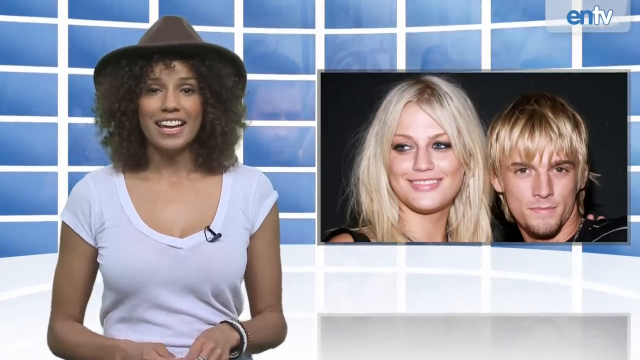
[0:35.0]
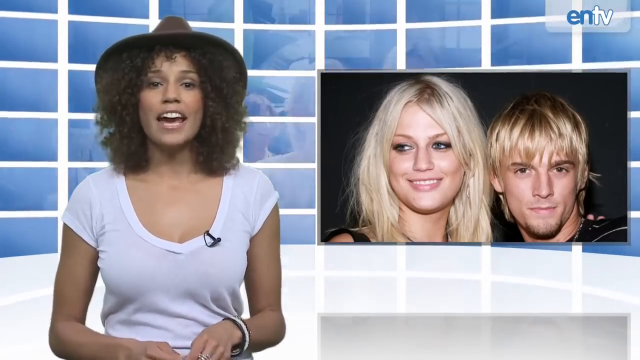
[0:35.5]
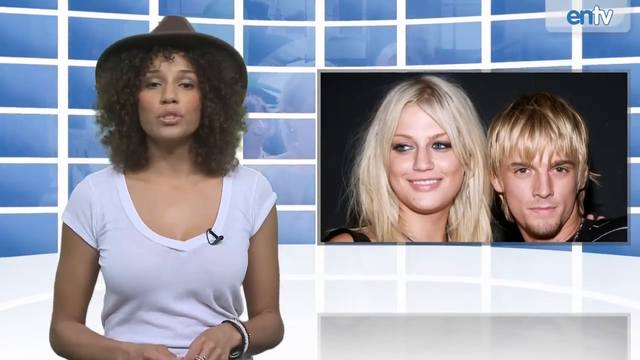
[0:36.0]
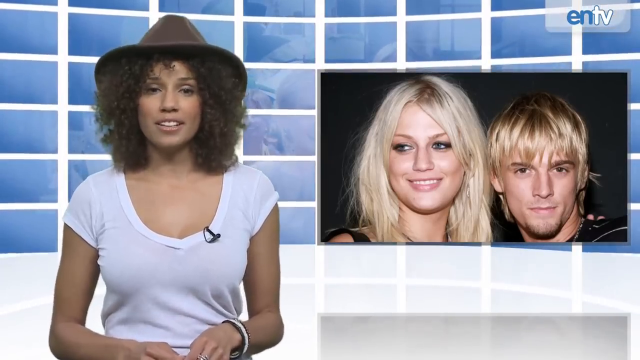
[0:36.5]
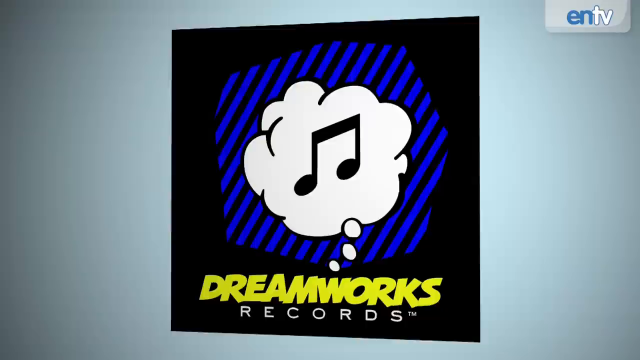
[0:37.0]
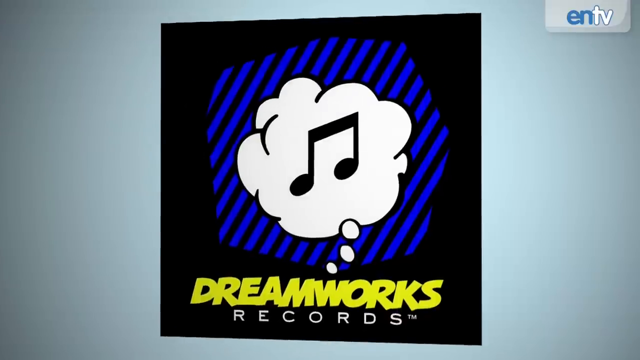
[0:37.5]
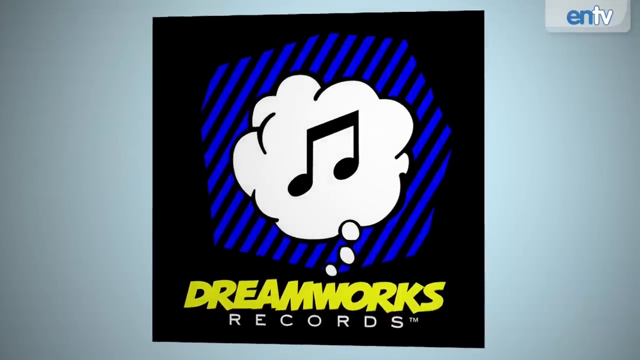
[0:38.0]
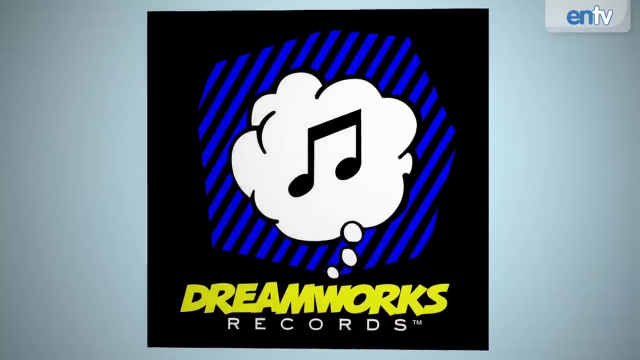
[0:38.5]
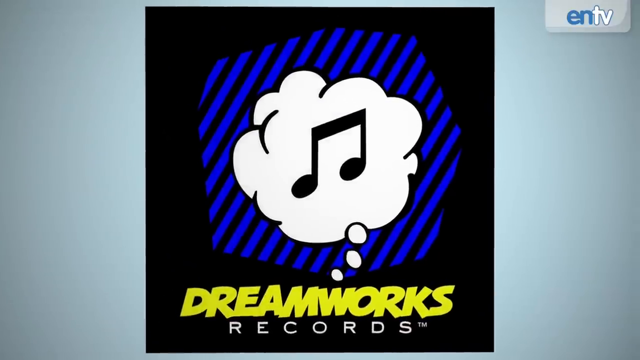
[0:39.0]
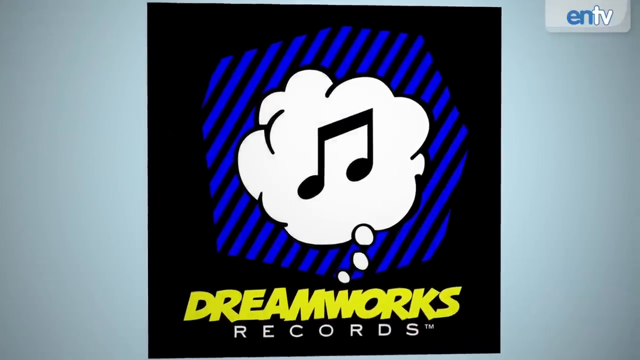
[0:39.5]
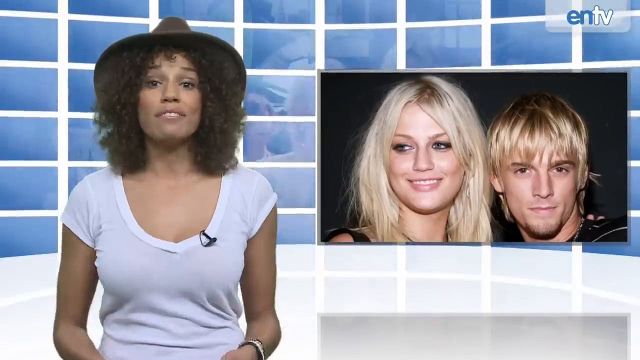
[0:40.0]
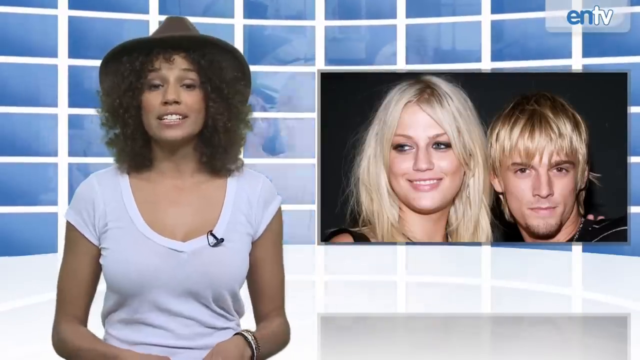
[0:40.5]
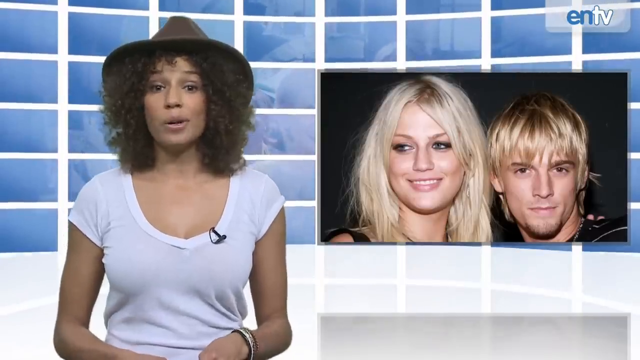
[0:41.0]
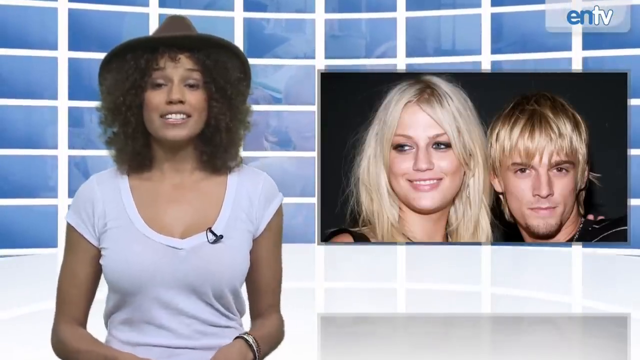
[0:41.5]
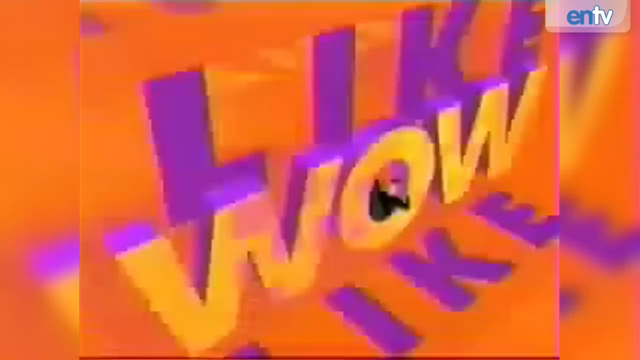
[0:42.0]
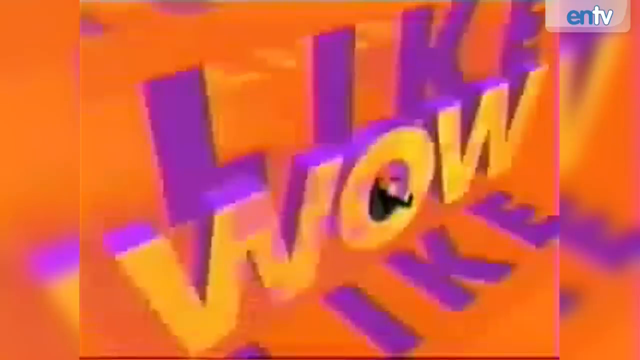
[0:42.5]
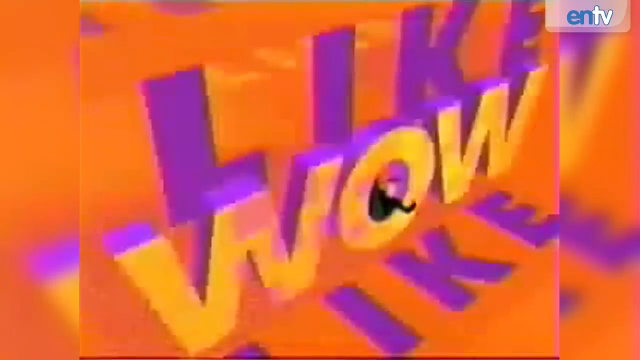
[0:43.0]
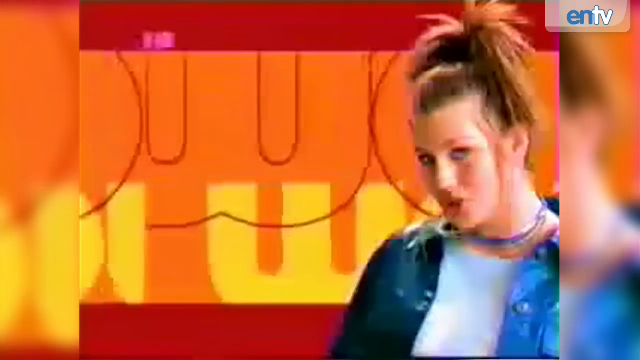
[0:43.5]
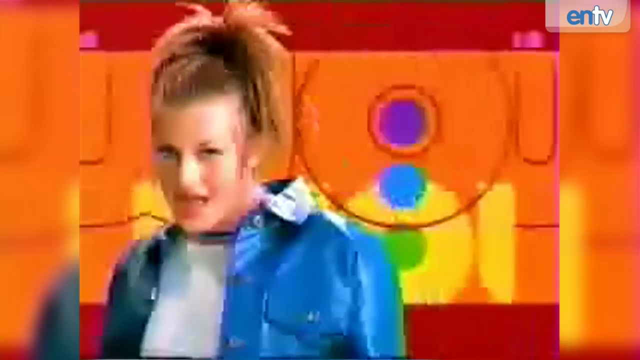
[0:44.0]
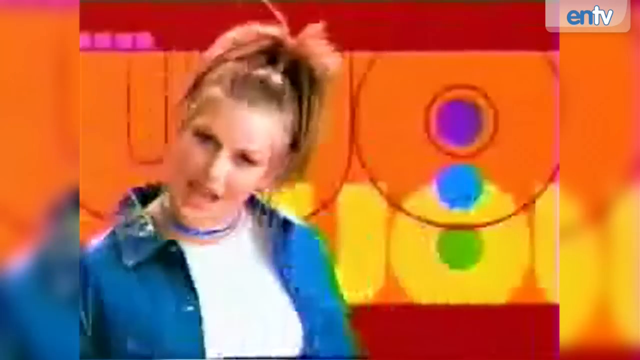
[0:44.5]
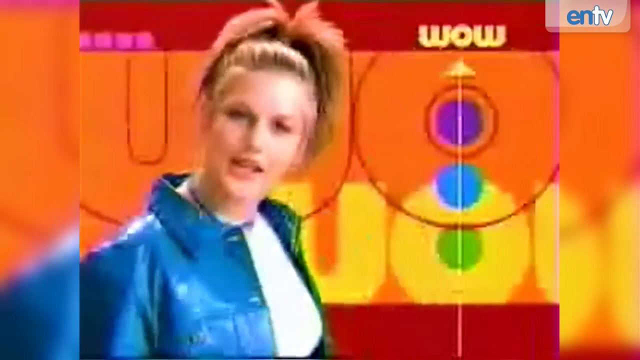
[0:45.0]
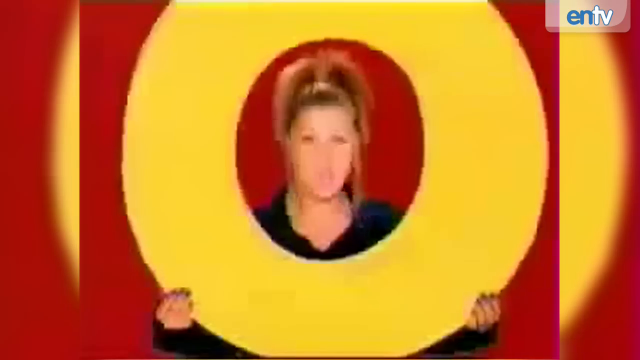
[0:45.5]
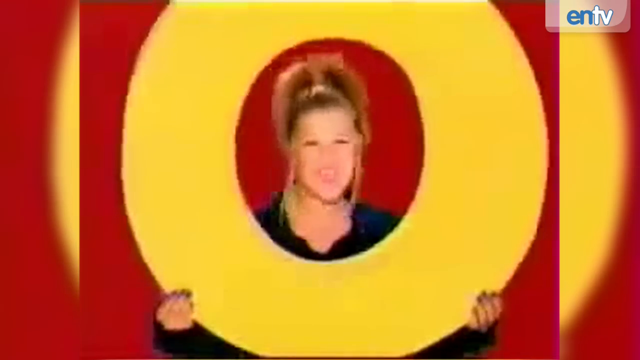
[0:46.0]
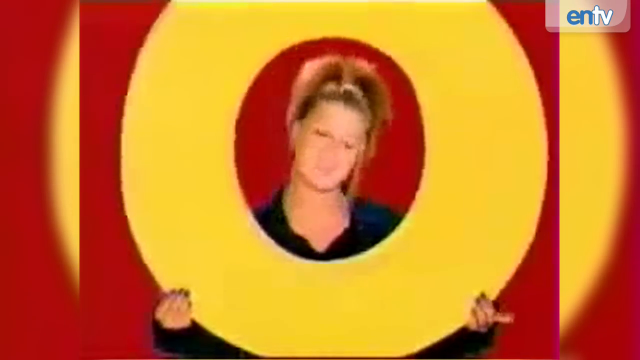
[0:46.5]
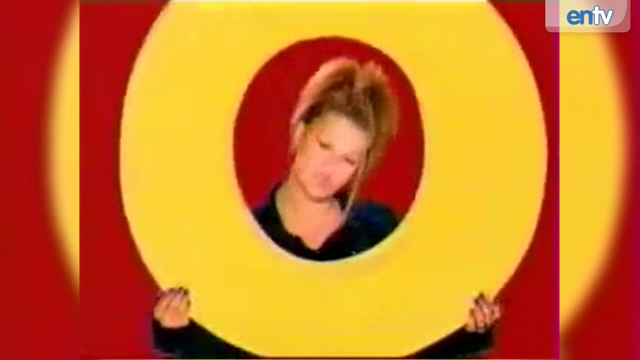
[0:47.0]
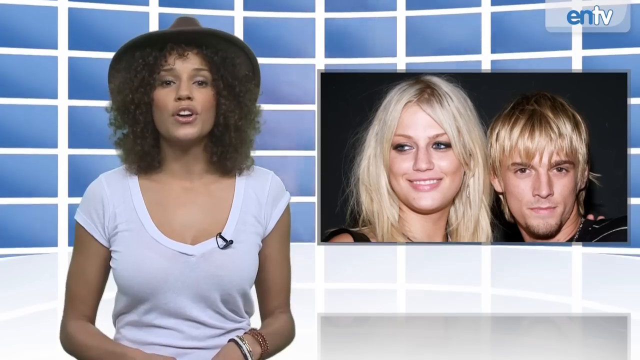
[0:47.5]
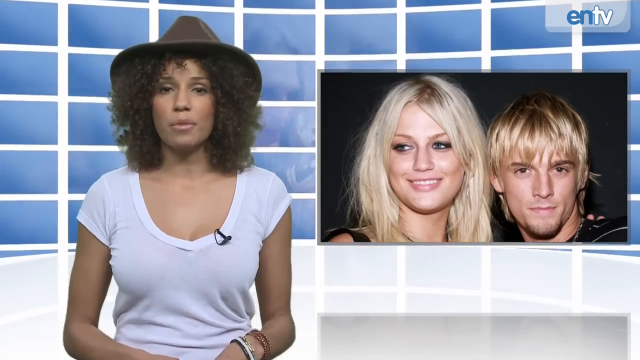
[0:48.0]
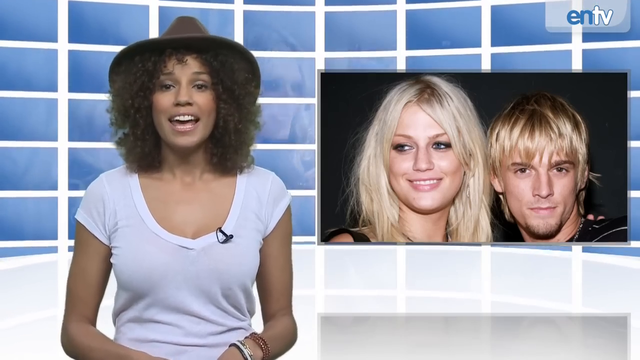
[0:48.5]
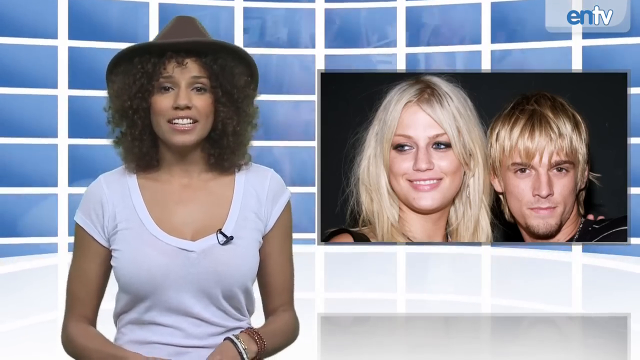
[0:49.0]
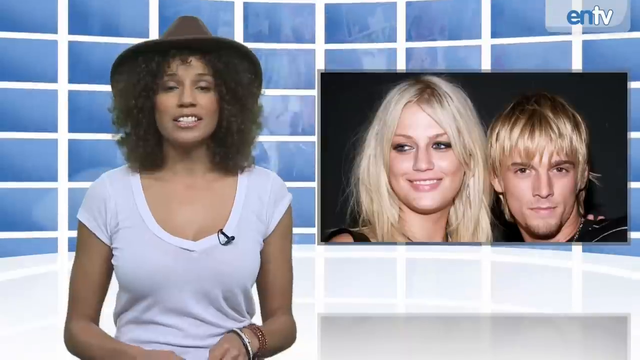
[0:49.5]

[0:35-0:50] The newscaster speaks to camera again. A logo for DreamWorks Records appears, and the video returns to the newscaster in the studio. A computer graphic reads "like wow", with a blonde woman facing or singing to camera; she appears to be the same blonde woman from before, possibly Leslie Carter. She is shown singing through the letter O. The video cuts back to the newscaster, with the same photo of the blonde woman and man on the right side.